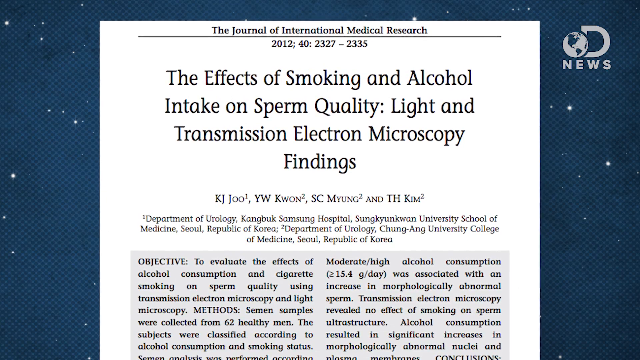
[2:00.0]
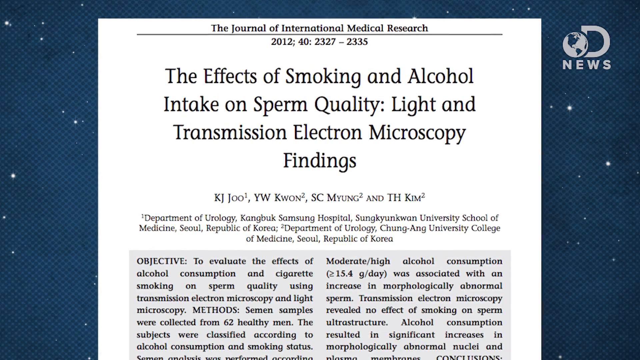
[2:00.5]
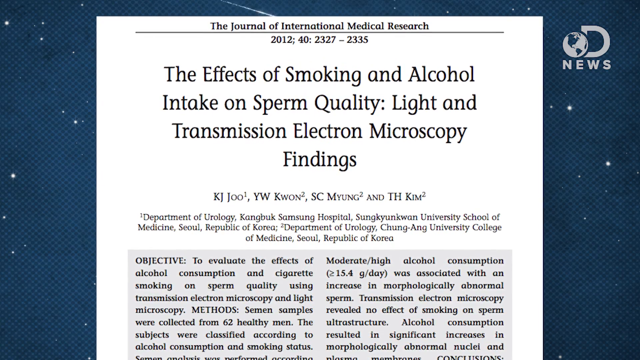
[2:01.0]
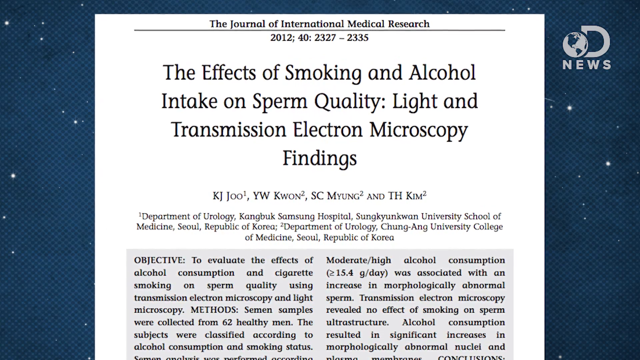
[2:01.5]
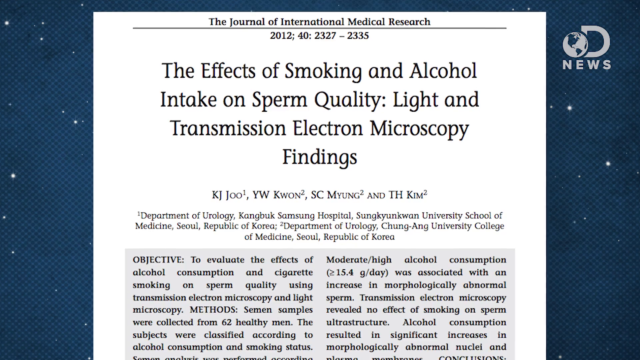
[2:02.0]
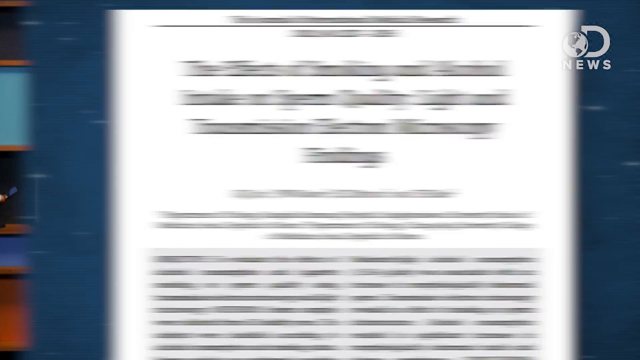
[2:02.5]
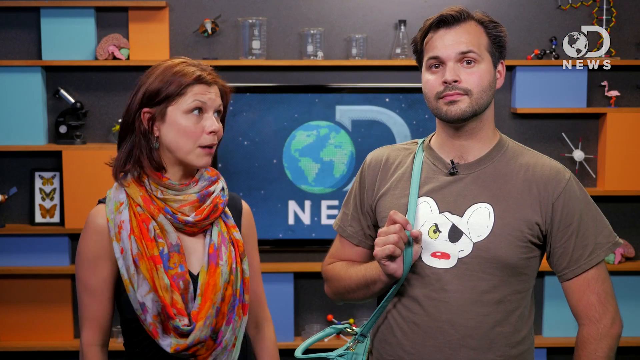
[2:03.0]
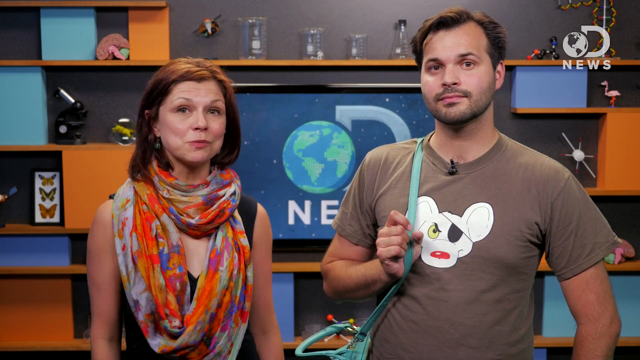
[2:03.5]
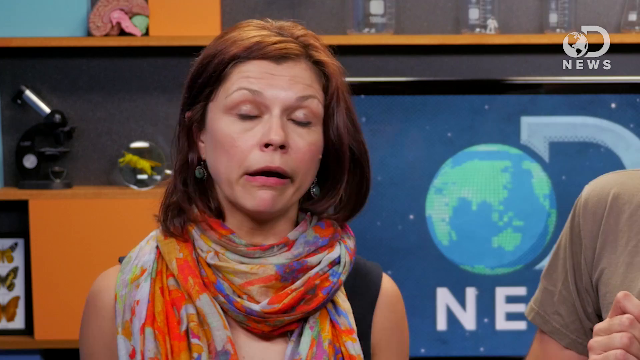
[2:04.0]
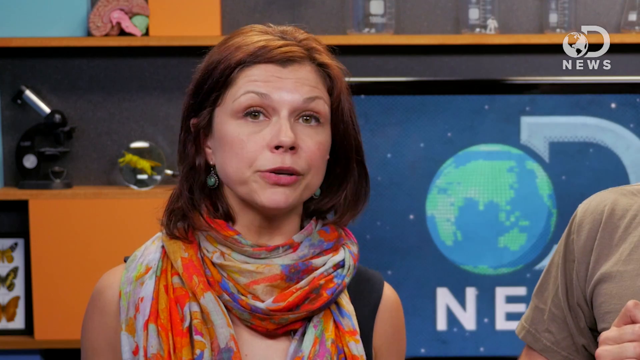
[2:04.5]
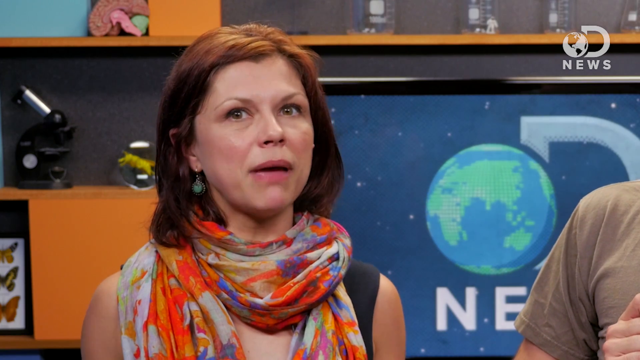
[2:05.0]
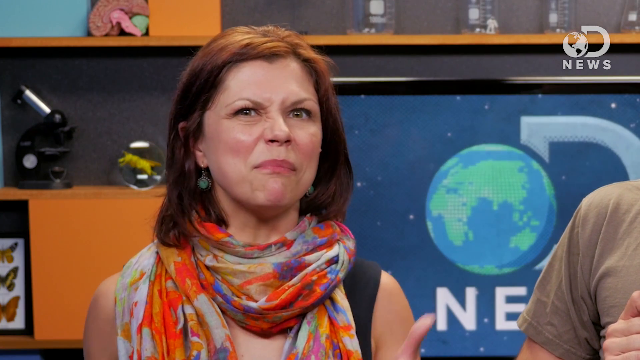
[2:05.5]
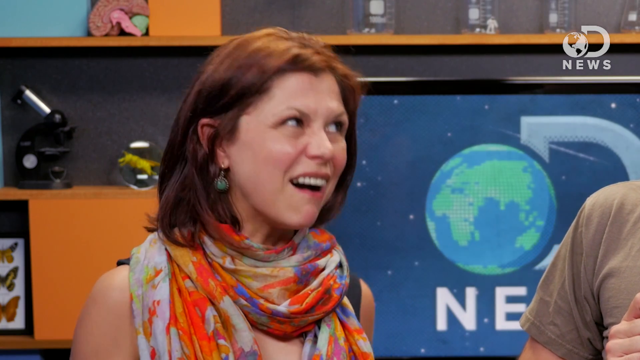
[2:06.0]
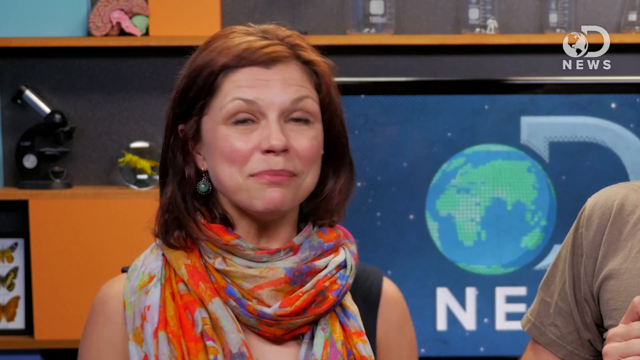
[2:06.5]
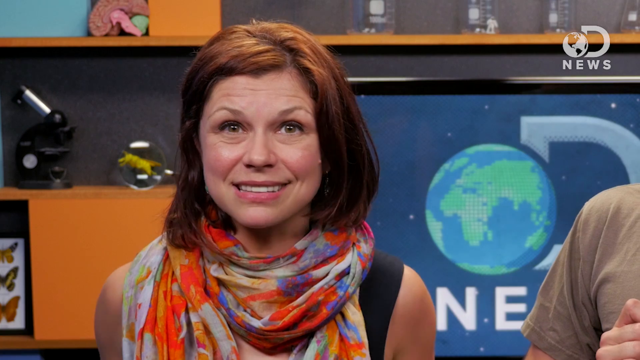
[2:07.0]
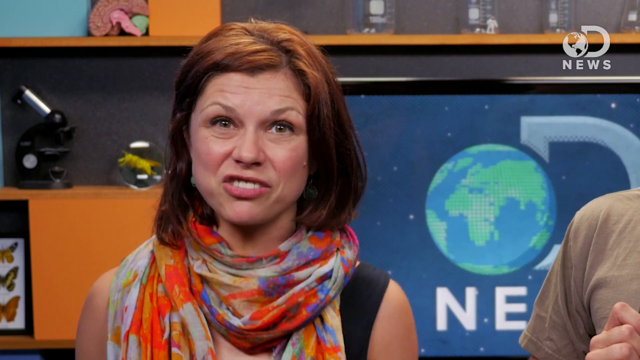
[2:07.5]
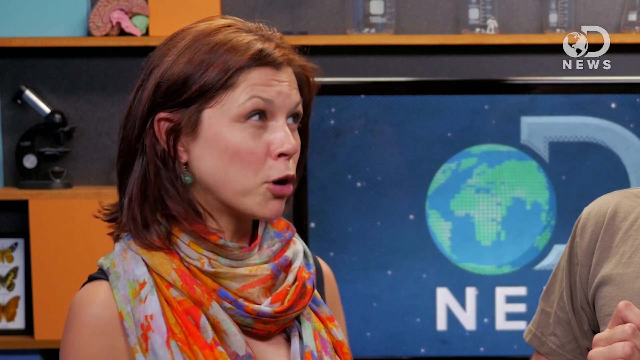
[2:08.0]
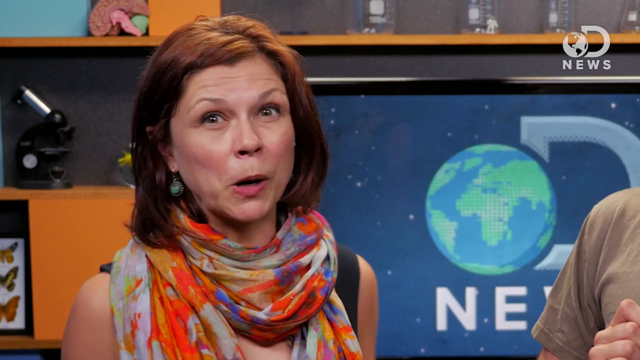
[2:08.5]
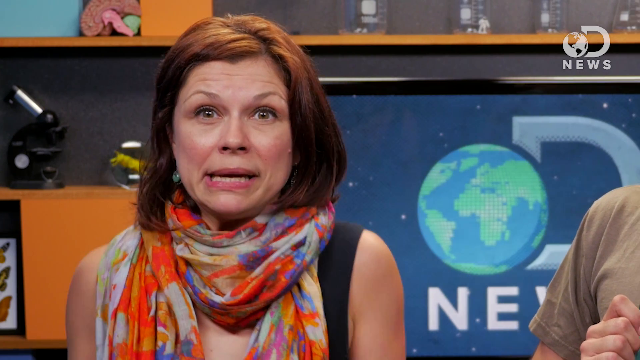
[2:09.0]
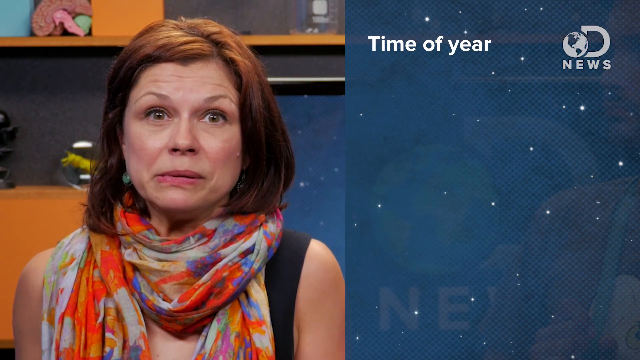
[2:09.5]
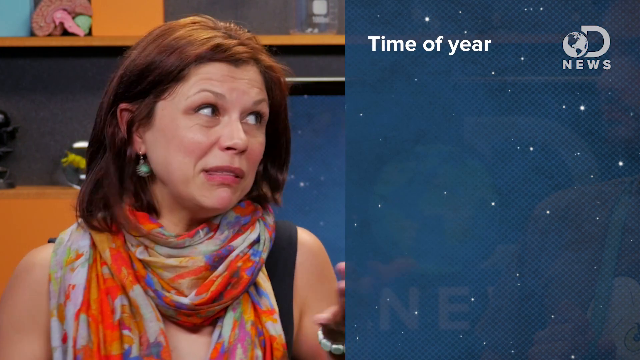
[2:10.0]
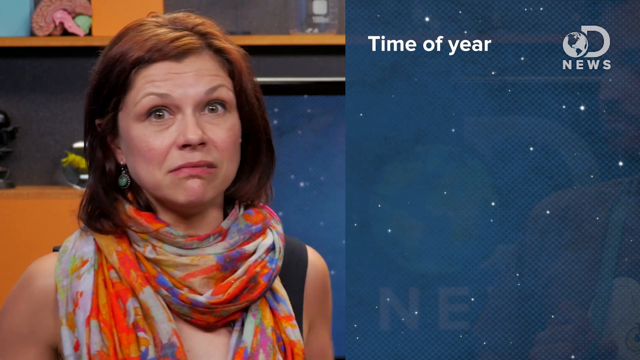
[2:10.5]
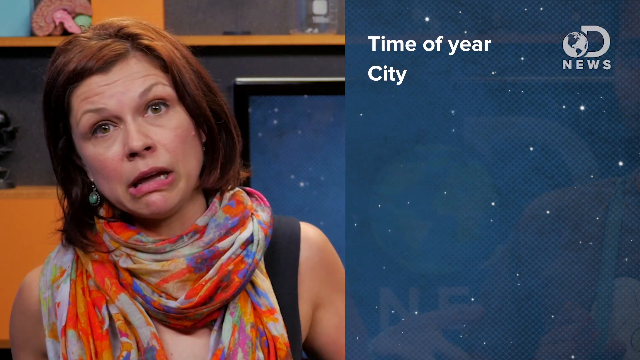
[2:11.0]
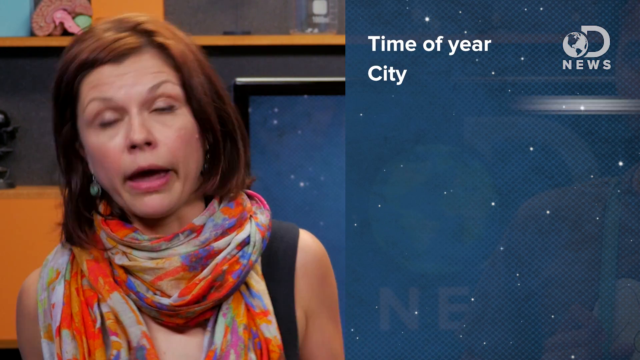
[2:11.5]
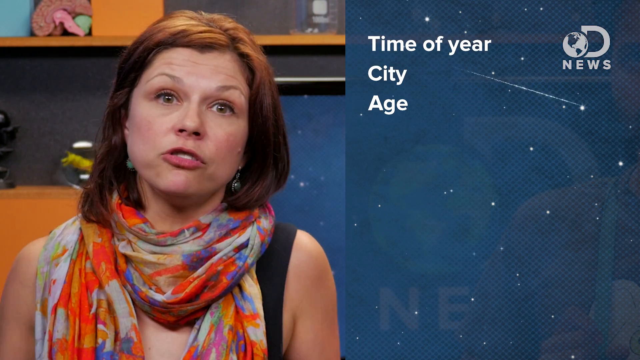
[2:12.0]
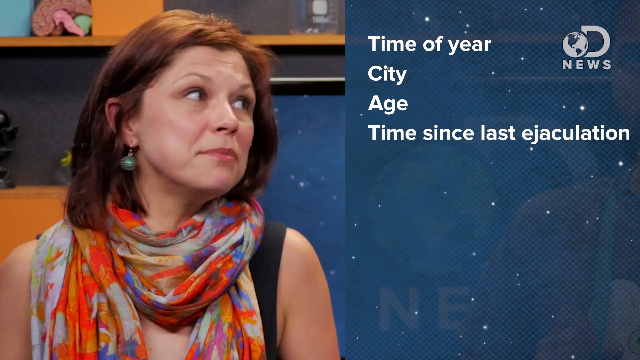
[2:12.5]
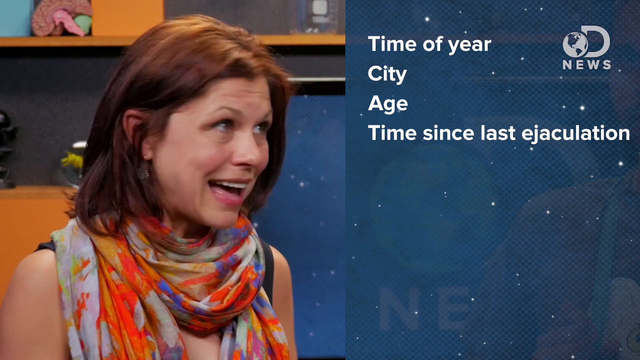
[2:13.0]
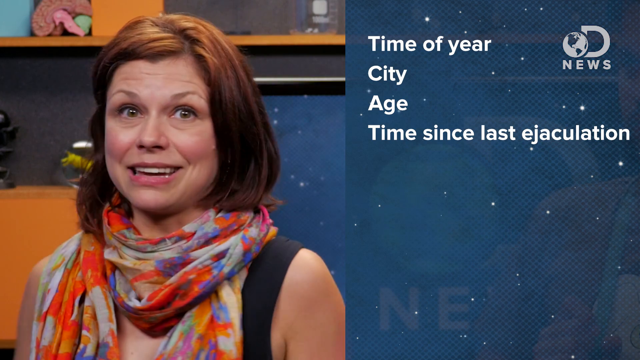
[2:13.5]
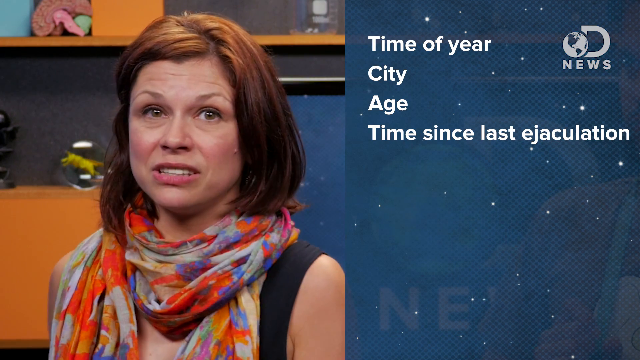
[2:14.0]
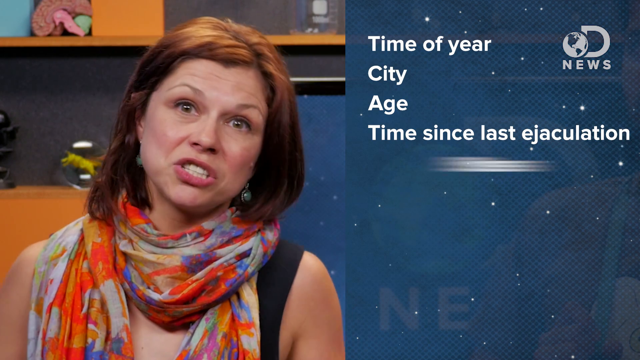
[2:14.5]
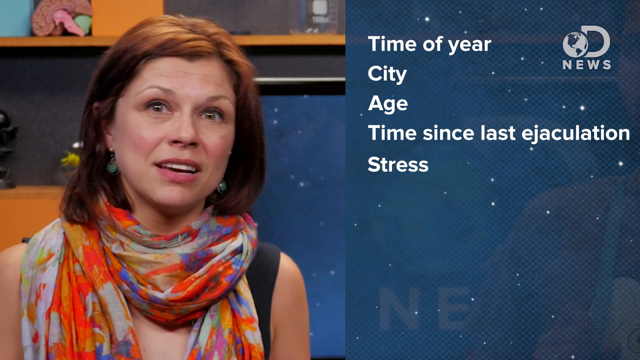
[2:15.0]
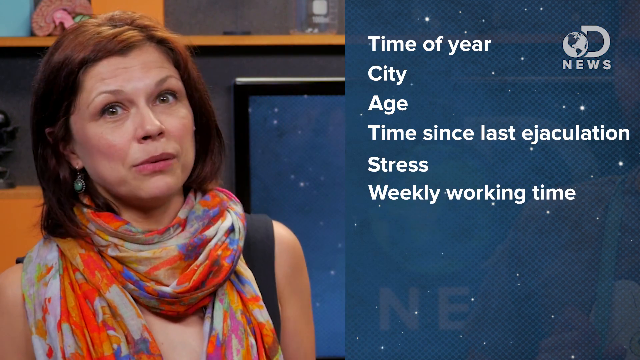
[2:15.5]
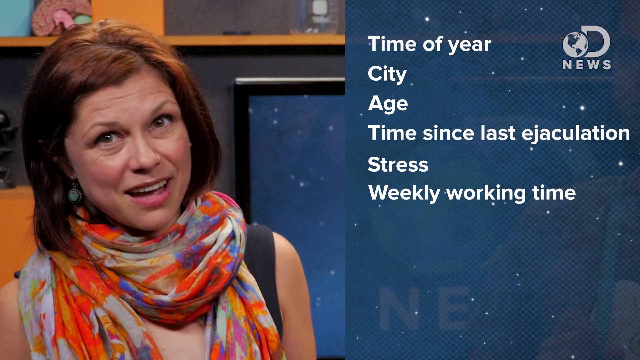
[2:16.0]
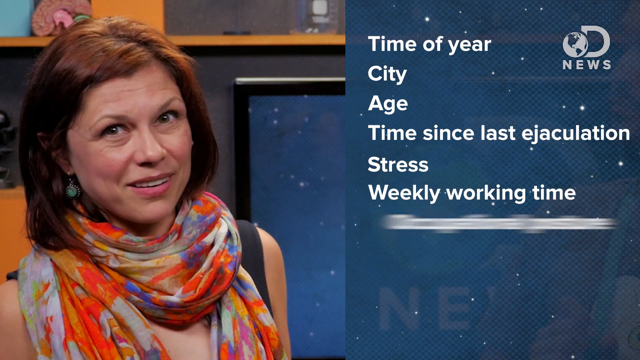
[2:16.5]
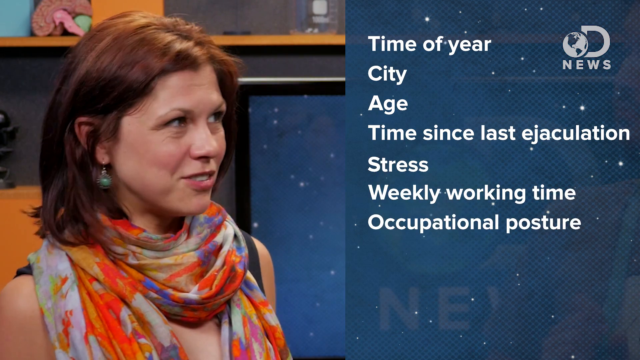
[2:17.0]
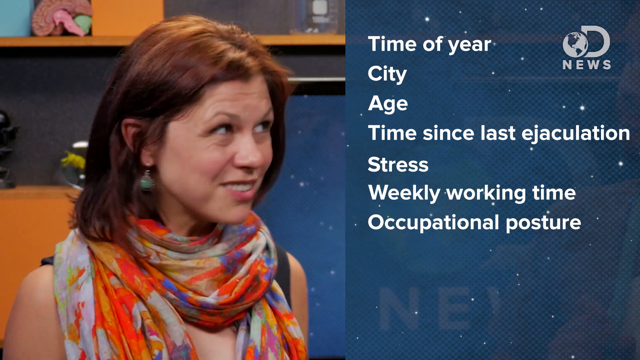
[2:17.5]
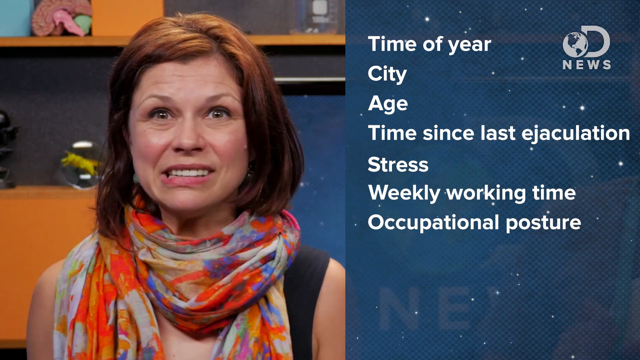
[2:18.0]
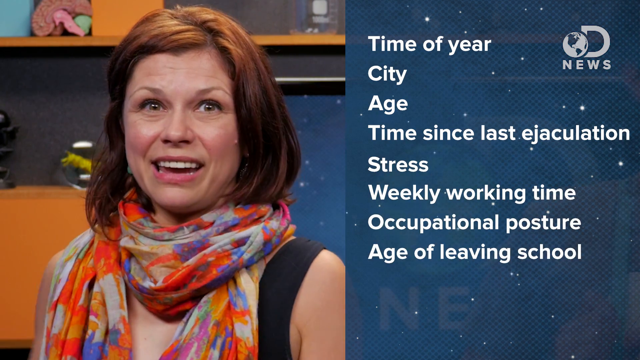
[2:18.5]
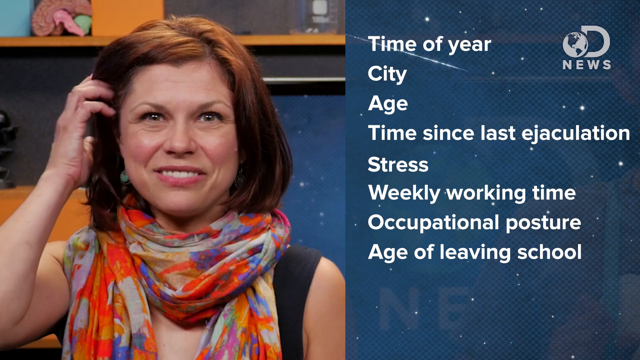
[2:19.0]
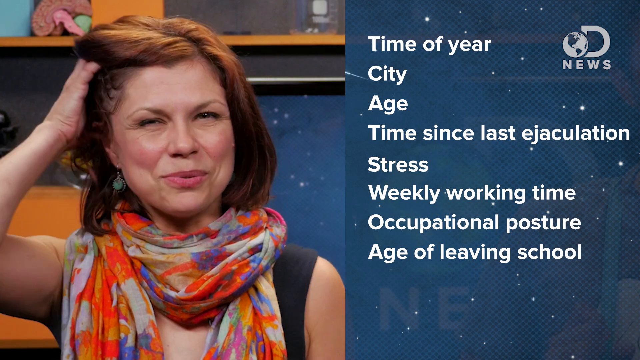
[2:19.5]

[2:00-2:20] The news article continues on screen: "The Effects of Smoking and Alcohol Intake on Sperm Quality, Light and Transmission, Electron Microscopy Findings." The article paper is white with black lettering, and around it is the D News logo with stars on a dark bluish background. The video returns to the two of them. He wears a brownish shirt with a mouse on it that has an eye patch and red nose. Her scarf has different colors: blues, reds, a little yellow and some green. She wears a sleeveless black shirt. A microscope is on her right side, the left of the screen. There are some blues in the background, and the shelves are kind of an orange color with science flasks. A picture that looks like butterflies is also on the left side. In a close-up of her with reddish brown hair, she talks to the camera, with the D News logo on the monitor and the Earth spinning. Then a graphic to the right of her says "time of year, city, age, time since ejaculation, stress, weekly working time, occupational posture, age of leaving school."